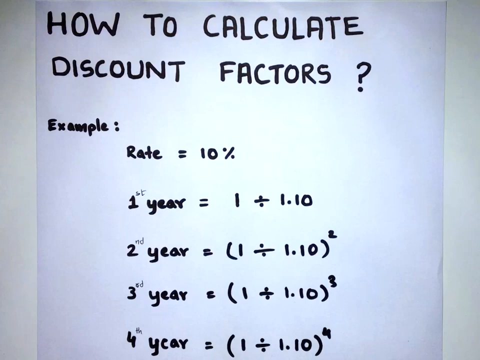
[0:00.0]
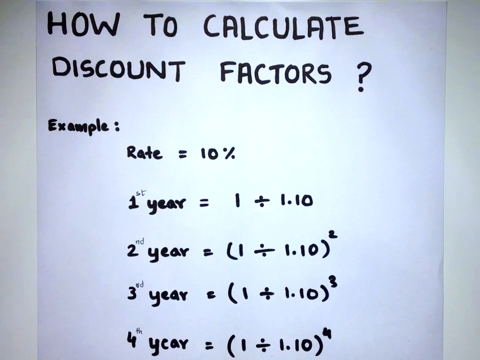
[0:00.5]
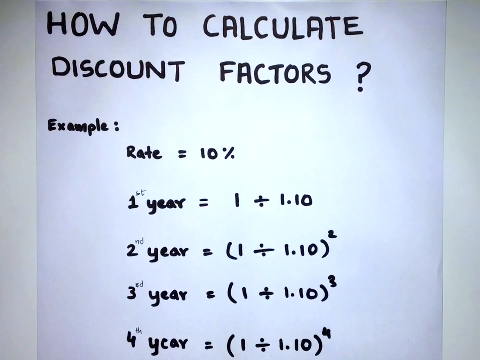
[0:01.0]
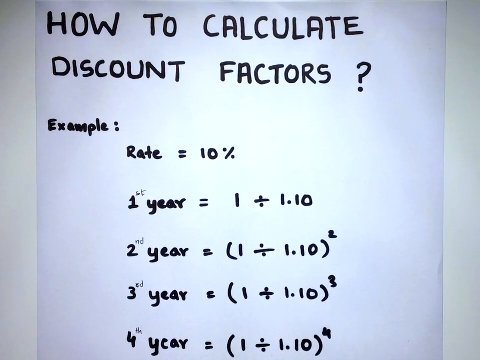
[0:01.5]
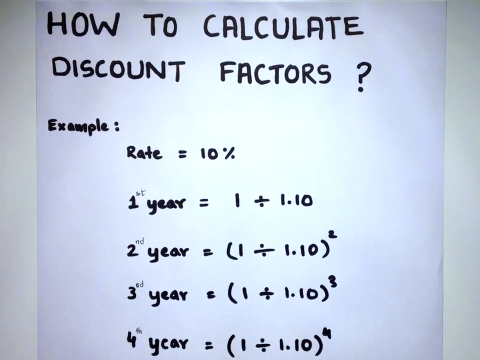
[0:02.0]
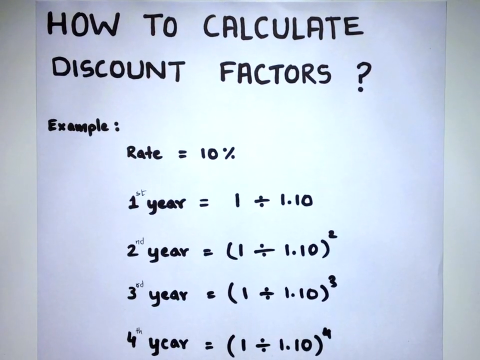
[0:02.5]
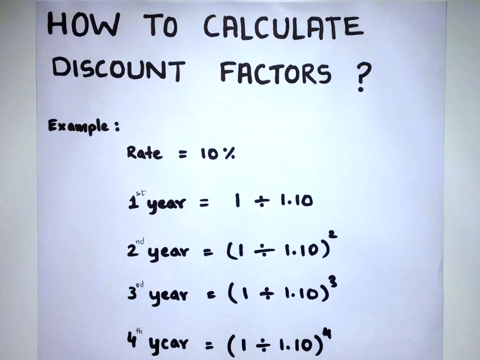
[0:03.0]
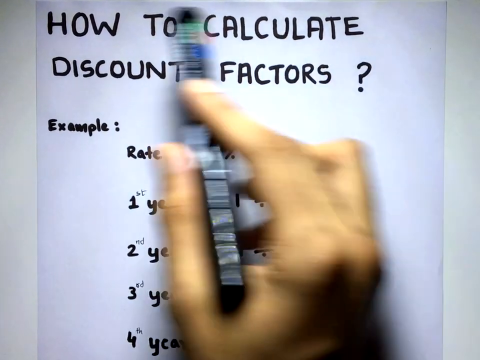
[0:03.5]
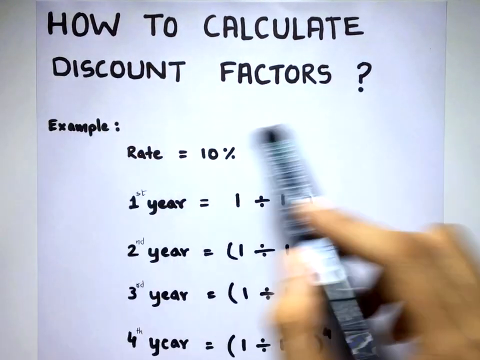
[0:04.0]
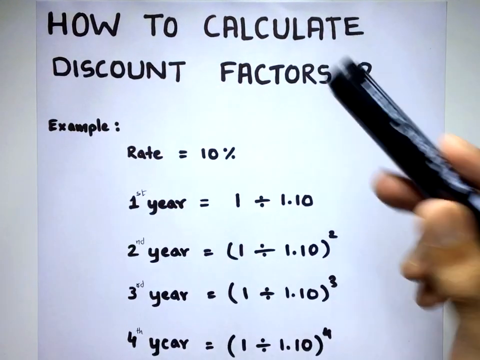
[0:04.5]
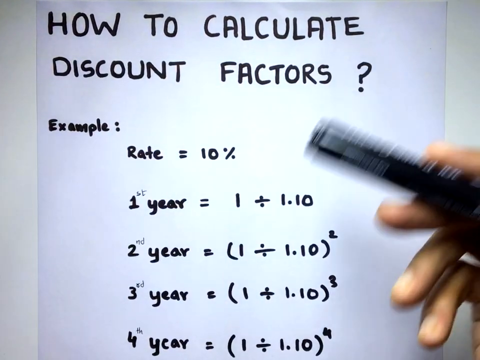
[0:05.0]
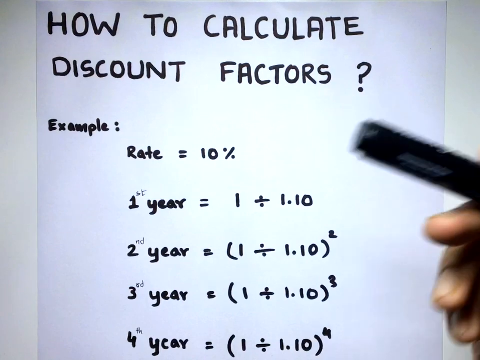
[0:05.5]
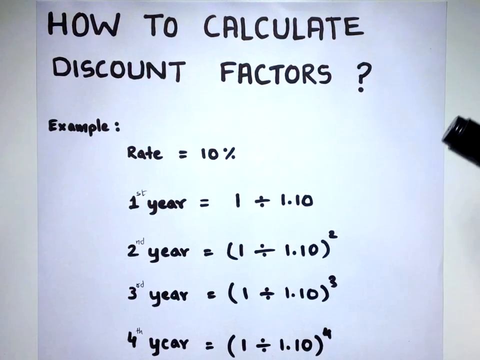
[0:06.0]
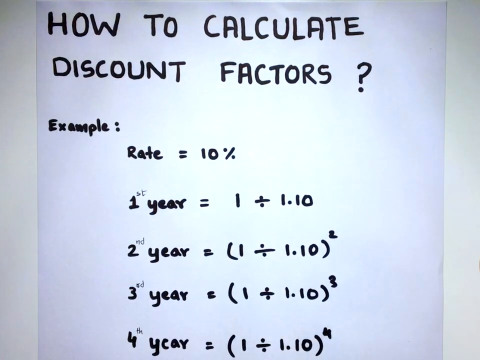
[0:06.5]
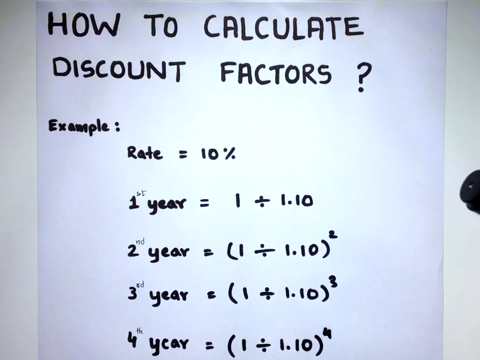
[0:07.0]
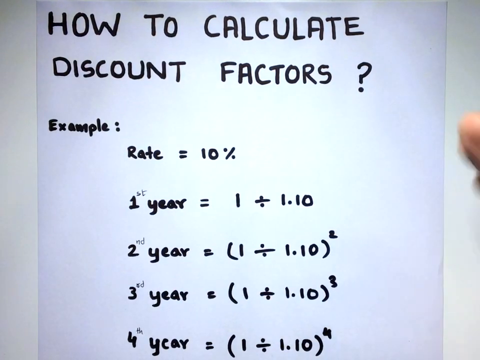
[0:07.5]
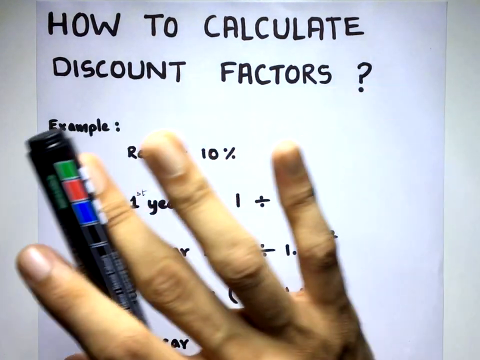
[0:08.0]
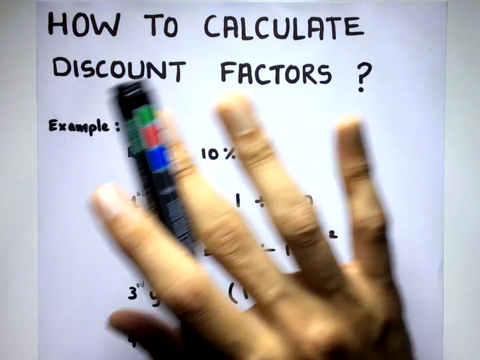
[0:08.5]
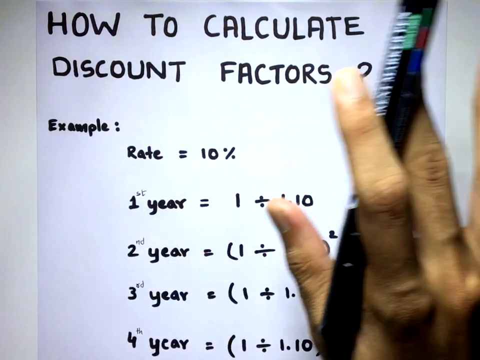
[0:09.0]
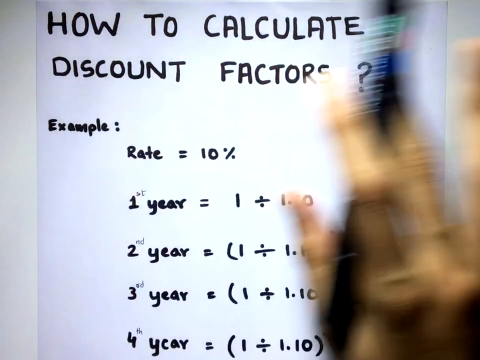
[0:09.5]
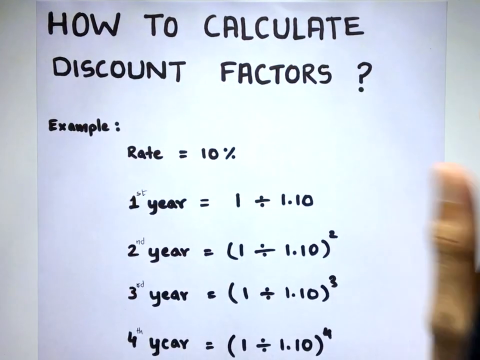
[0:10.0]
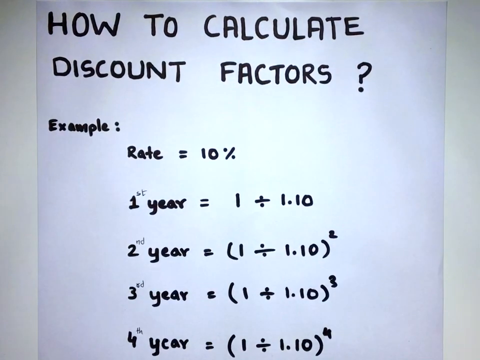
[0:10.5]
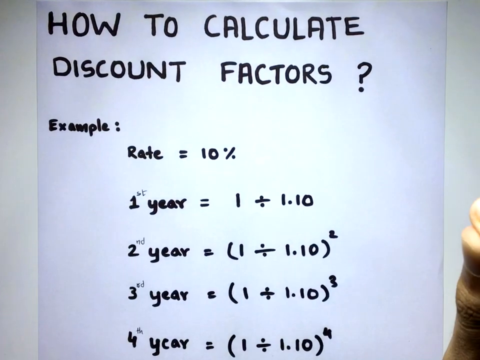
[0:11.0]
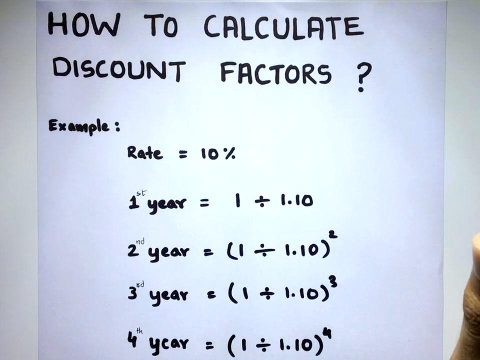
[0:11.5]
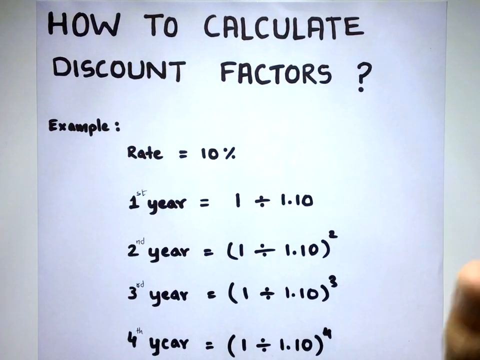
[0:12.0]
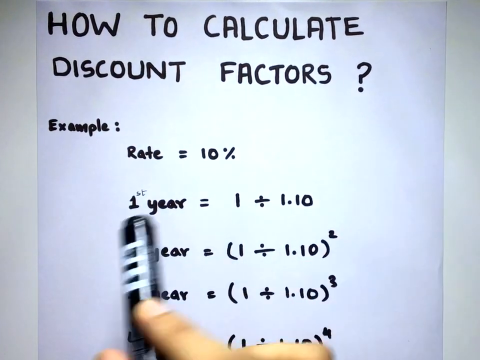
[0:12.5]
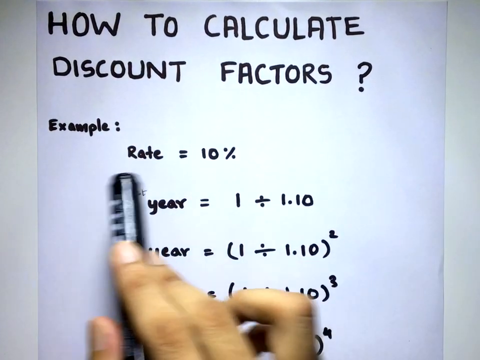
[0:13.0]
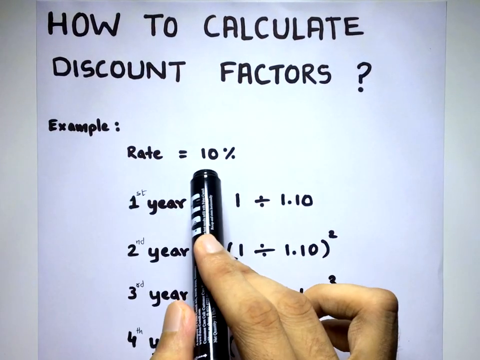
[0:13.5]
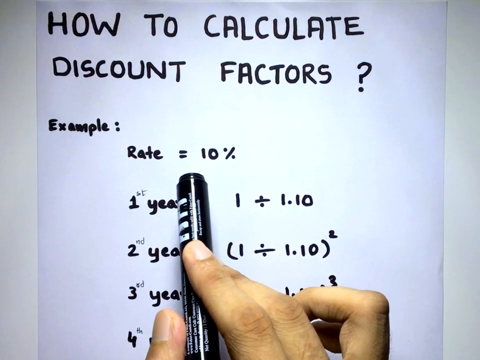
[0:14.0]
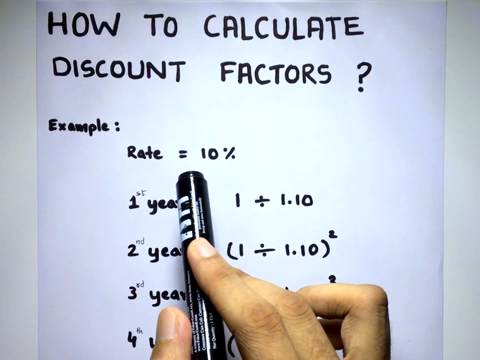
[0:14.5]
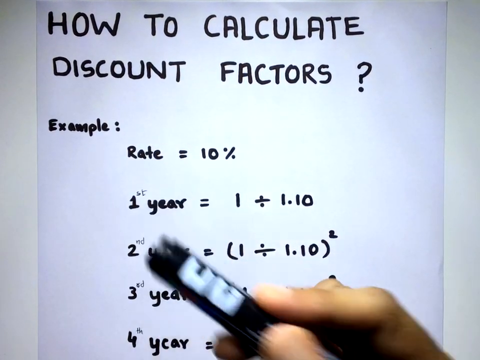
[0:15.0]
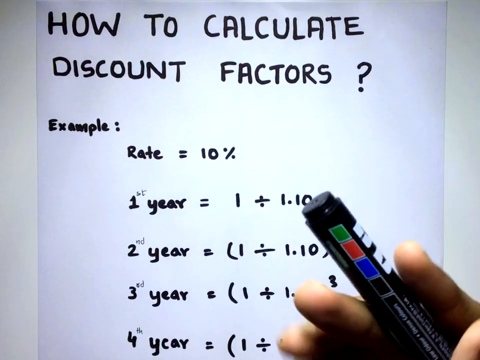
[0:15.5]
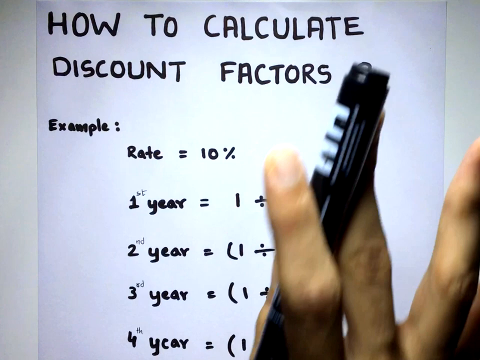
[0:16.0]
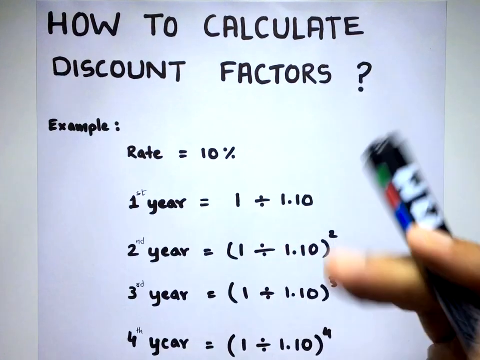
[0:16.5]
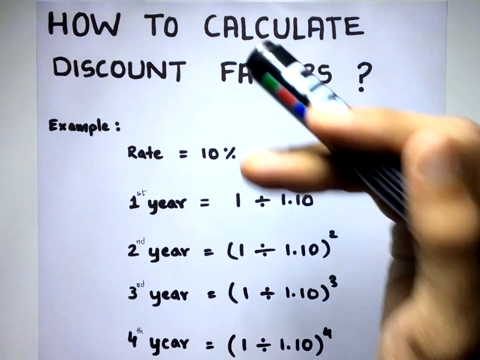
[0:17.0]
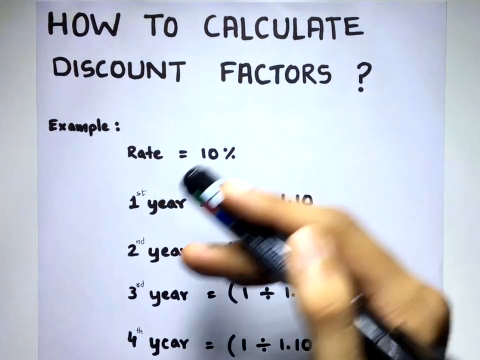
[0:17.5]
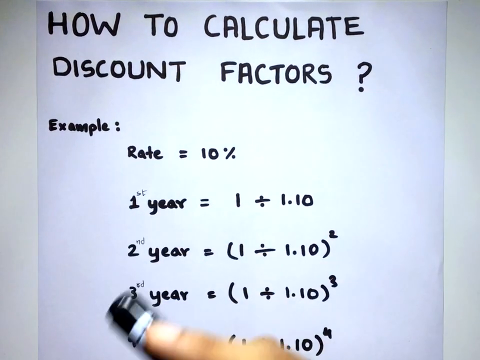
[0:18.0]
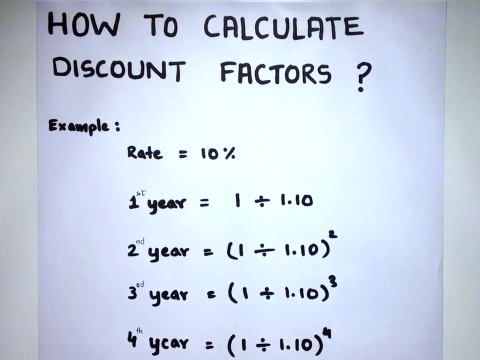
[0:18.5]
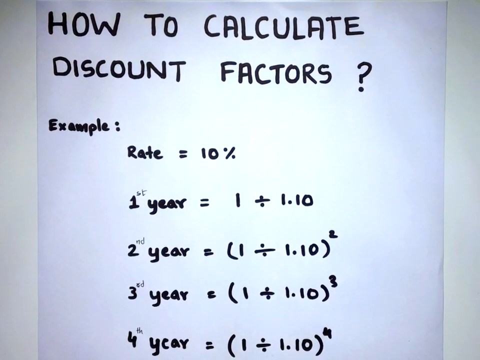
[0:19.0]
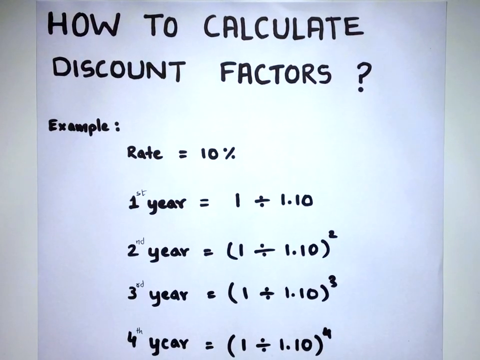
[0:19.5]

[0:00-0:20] The scene opens on what appears to be a whiteboard or a projector. A hand holding a pen comes into frame and seems to gesture or indicate with the pen. At the top of the main picture is written "how to calculate discount factors," followed by an example. The first couple of lines read "rate equals 10, first year equals one divided by 1.1" and so on. There are five lines: the first is rate, followed by first year, second year, third year and fourth year. The hand gestures at each item on the piece of paper, pointing to rate, then 10%, then example. It seems to be a teacher giving a math lesson about how to calculate discount factors.